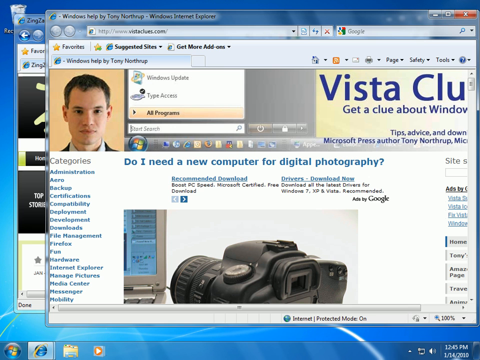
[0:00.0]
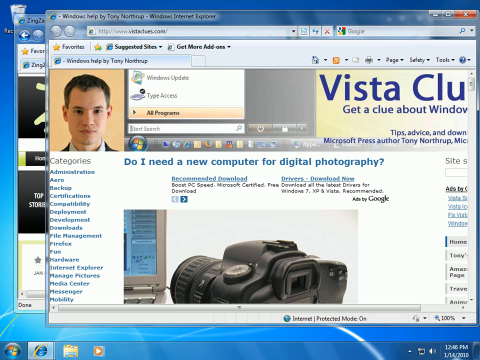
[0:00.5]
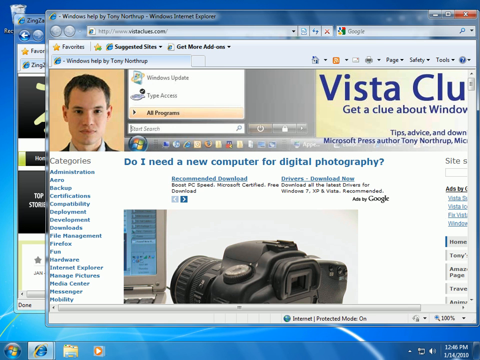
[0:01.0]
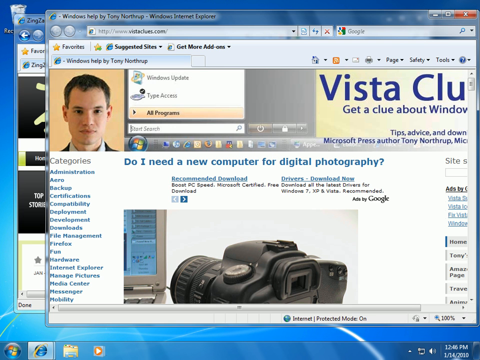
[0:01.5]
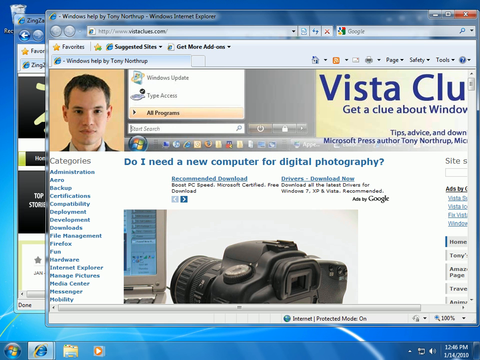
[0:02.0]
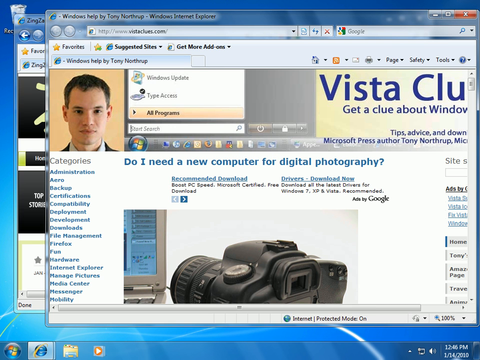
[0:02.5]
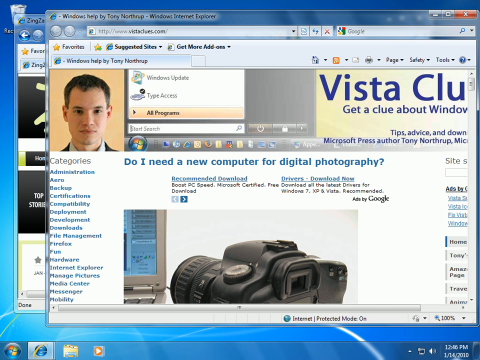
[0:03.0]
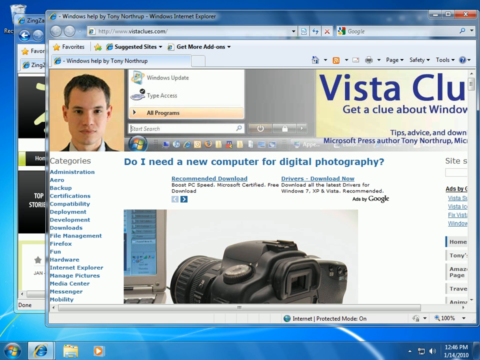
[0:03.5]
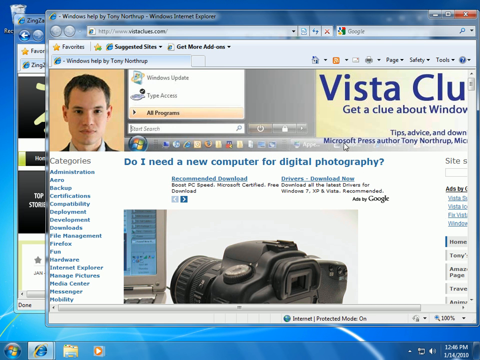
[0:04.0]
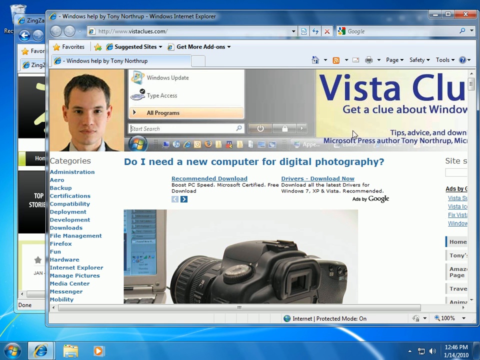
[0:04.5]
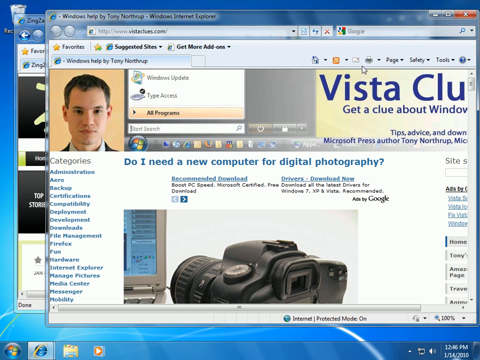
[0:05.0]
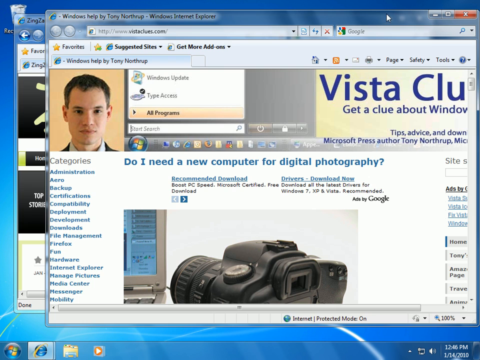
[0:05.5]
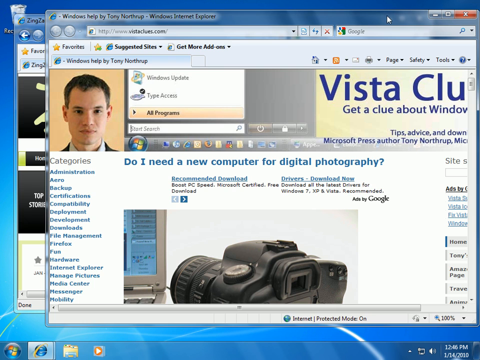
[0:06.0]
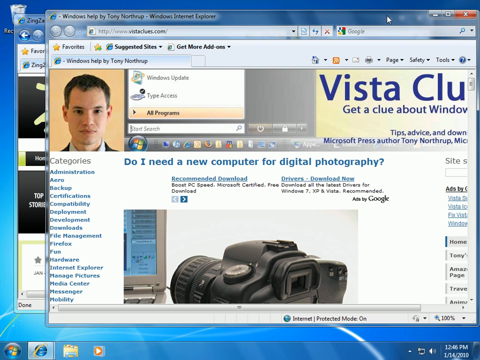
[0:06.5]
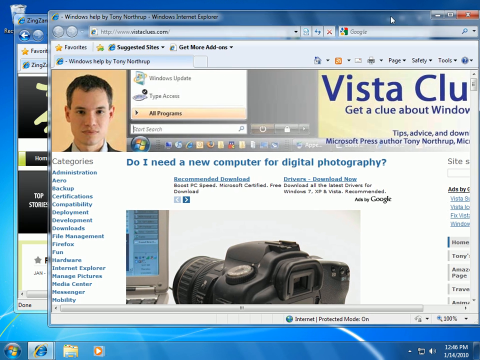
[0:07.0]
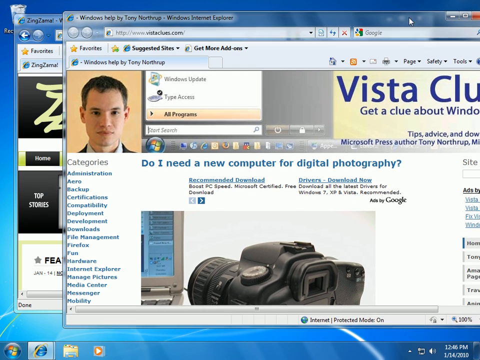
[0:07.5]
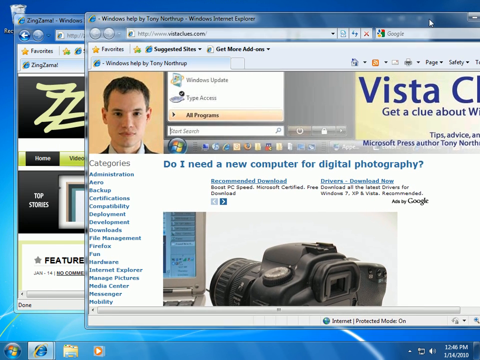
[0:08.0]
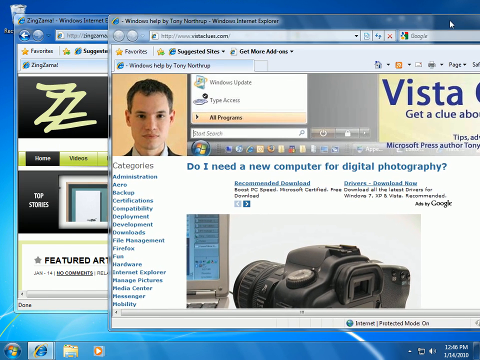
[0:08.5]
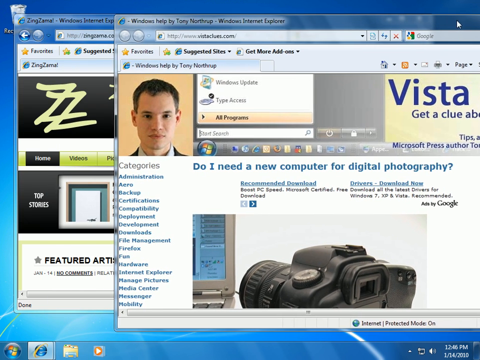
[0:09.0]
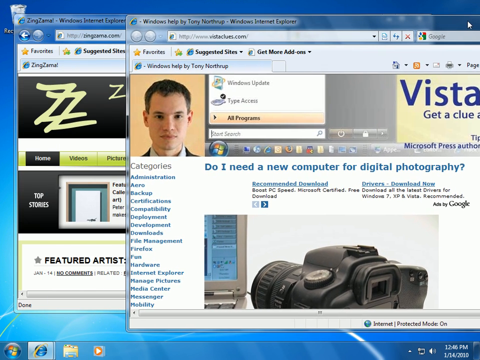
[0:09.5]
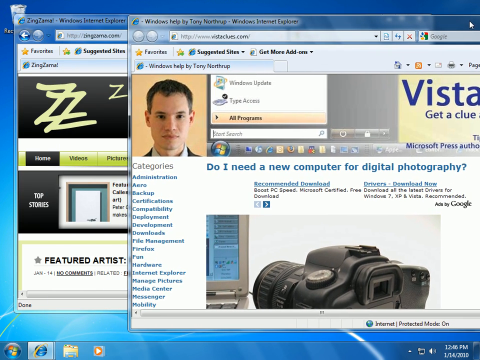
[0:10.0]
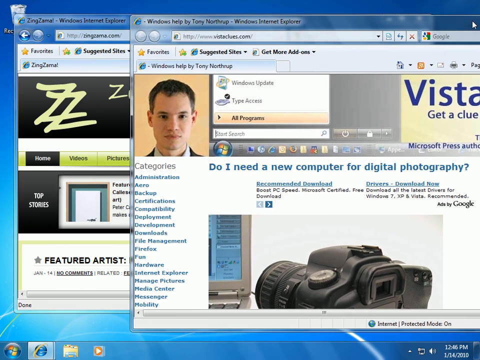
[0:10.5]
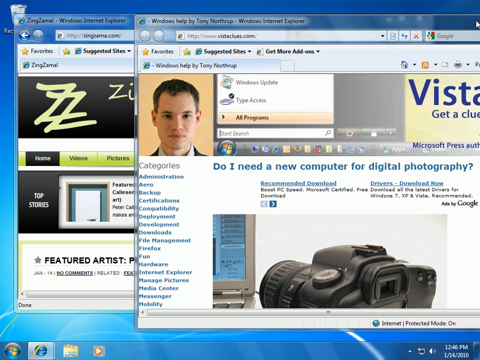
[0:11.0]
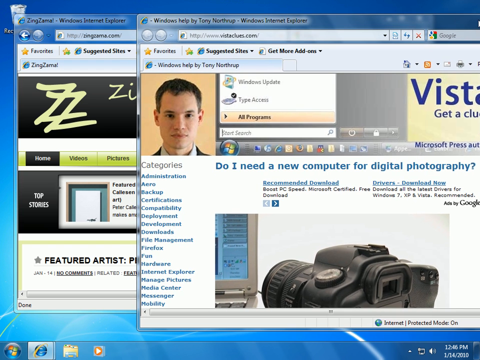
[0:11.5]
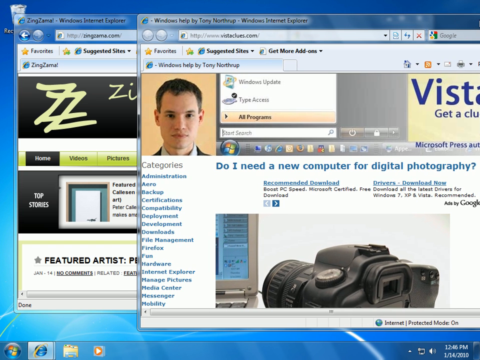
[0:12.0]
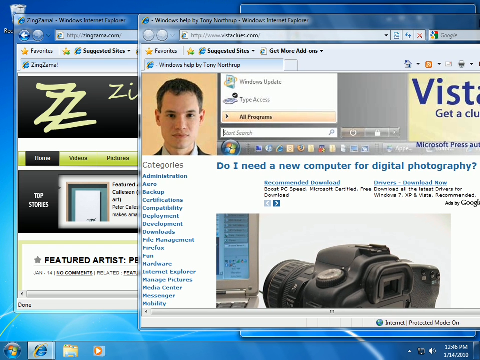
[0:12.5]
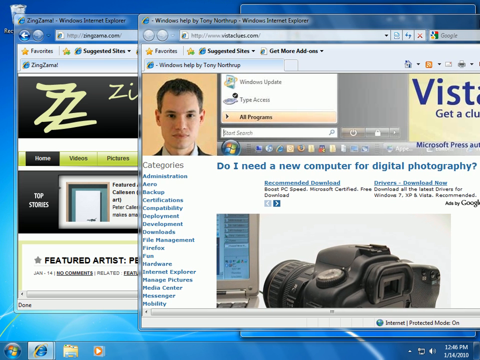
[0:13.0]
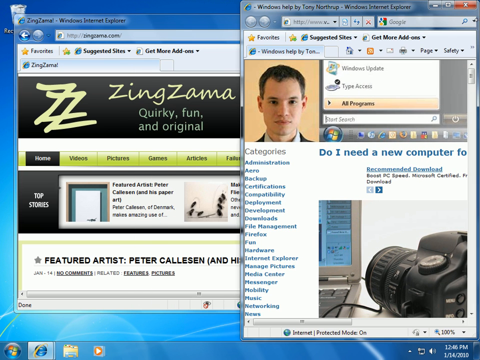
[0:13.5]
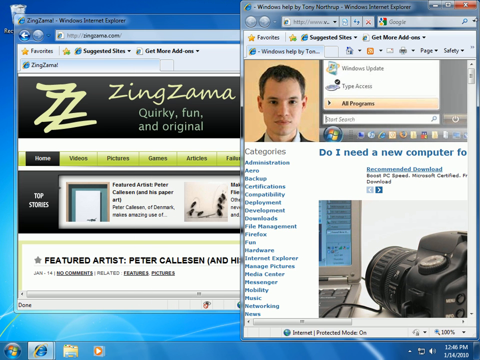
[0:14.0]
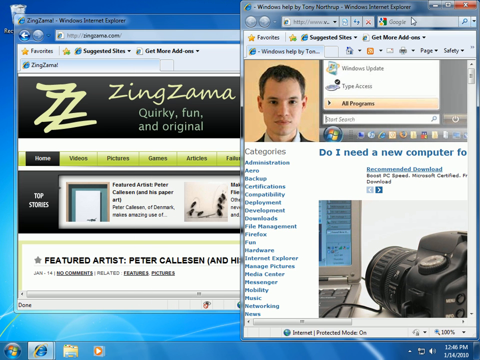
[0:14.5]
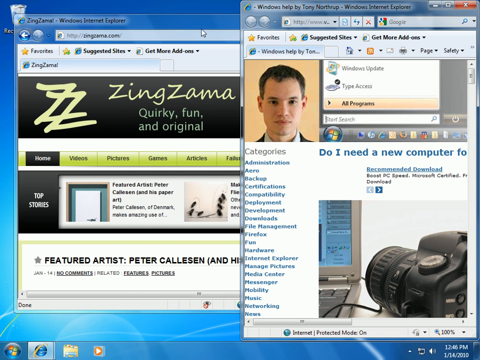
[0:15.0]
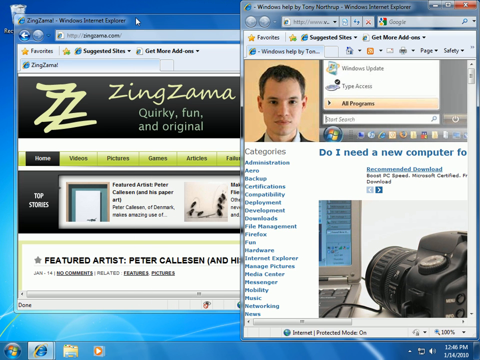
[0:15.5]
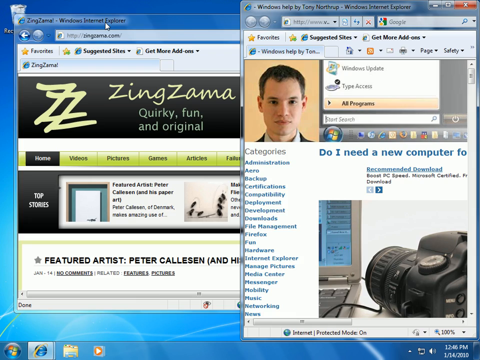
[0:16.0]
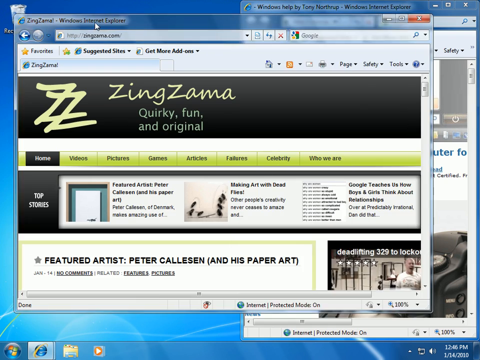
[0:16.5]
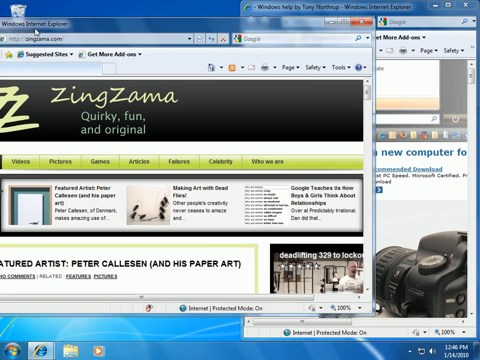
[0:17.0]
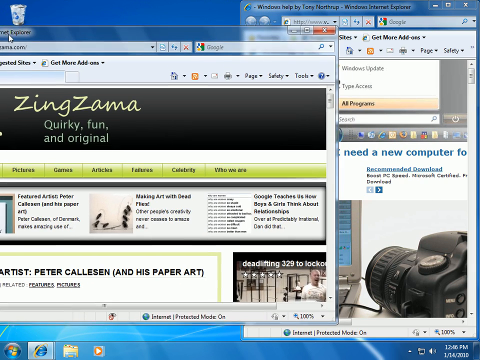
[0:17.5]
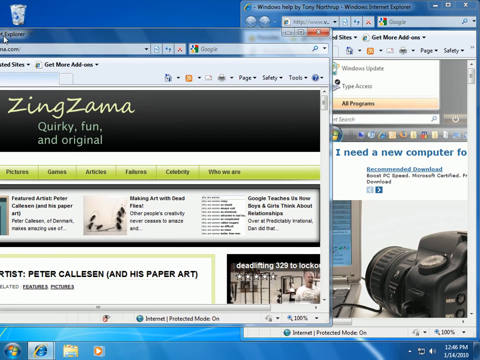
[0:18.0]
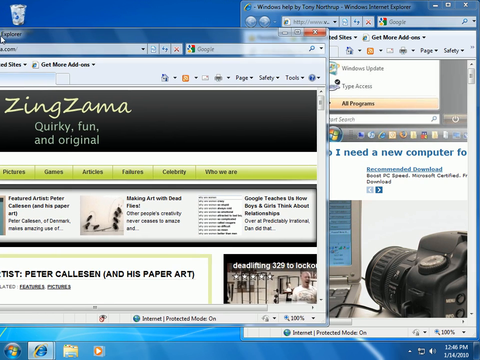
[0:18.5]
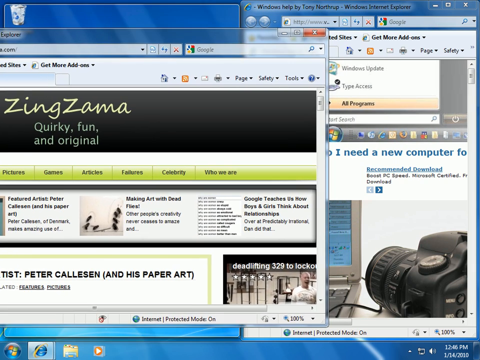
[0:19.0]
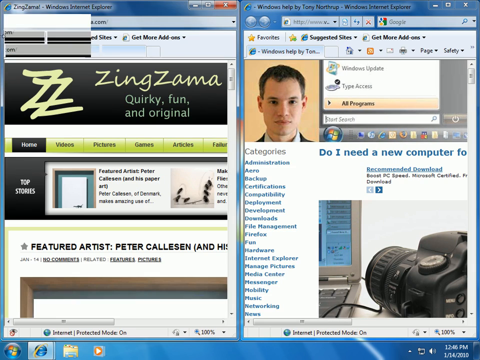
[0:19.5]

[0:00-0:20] Two webpages are open on a computer screen in a Windows Internet Explorer browser. The page in front has a picture of a man in the upper left-hand corner; underneath it reads "do I need a new computer for digital photography?", and below that is an image of a camera. The window is slowly moved off to the right side and then fully minimized so it is off that side, revealing the second page, which is pulled to the front. Its banner at the top reads "ZingZama, quirky, fun, and original." This window is slowly moved over to the right or to the left and then collapsed as well. Both websites look somewhat old and are very cluttered, with many images and a lot of text. The ZingZama page also mentions Peter Callesen and his paper art.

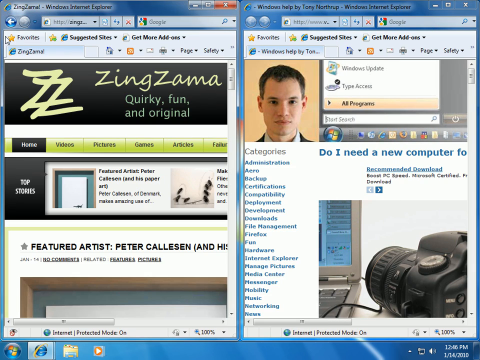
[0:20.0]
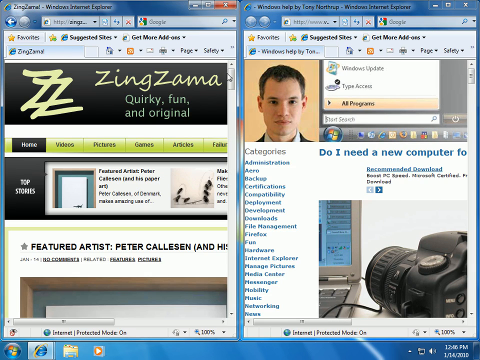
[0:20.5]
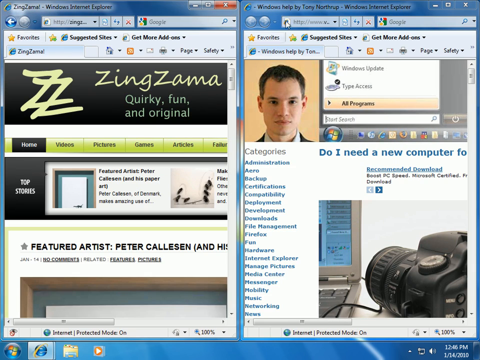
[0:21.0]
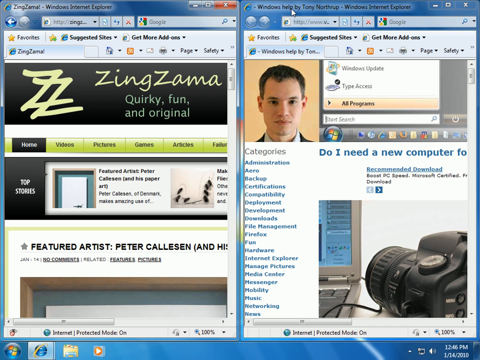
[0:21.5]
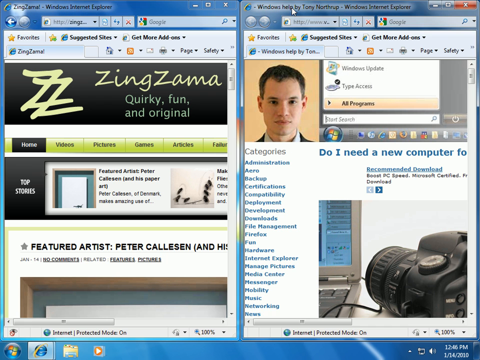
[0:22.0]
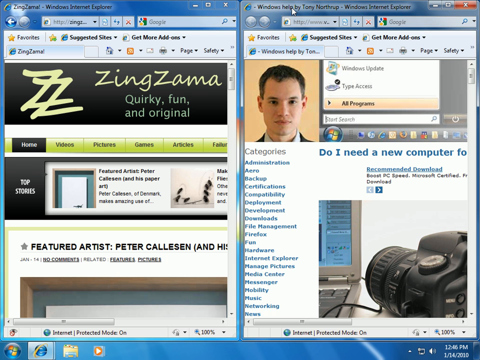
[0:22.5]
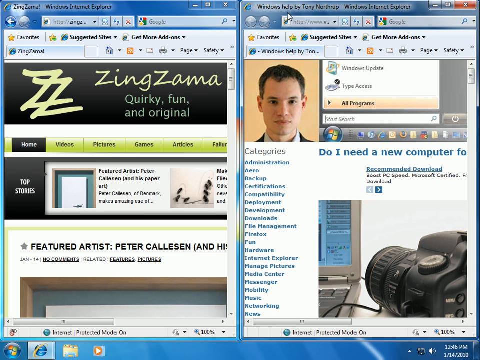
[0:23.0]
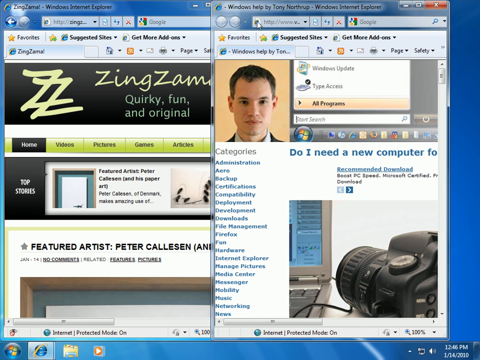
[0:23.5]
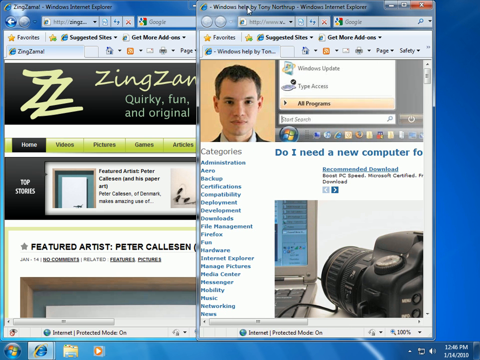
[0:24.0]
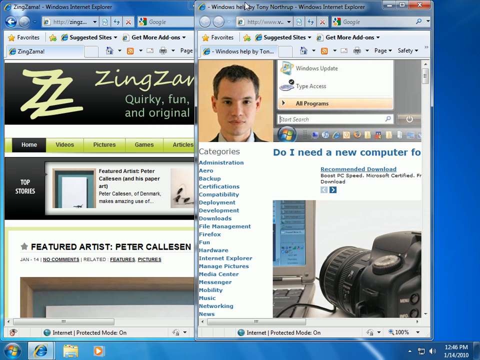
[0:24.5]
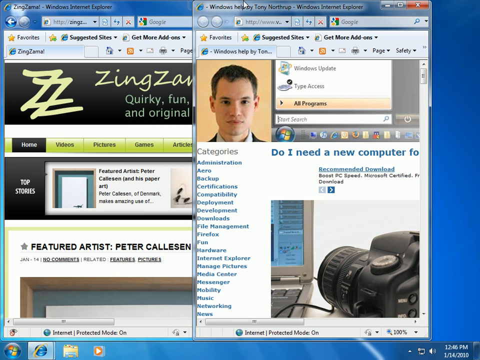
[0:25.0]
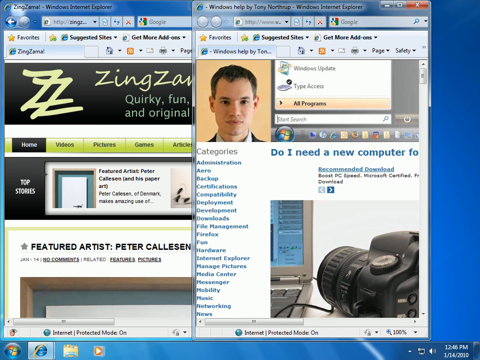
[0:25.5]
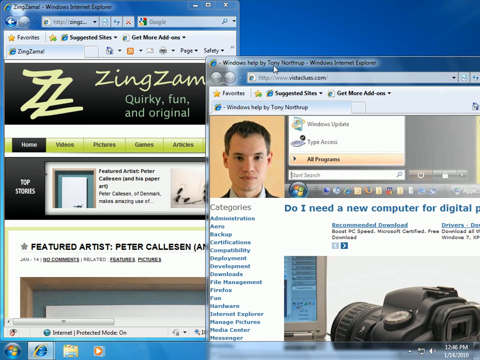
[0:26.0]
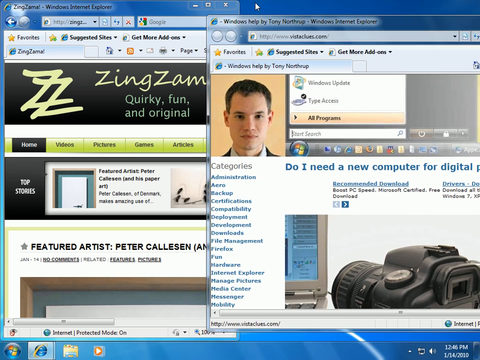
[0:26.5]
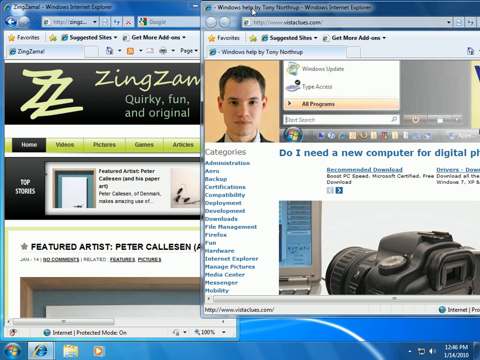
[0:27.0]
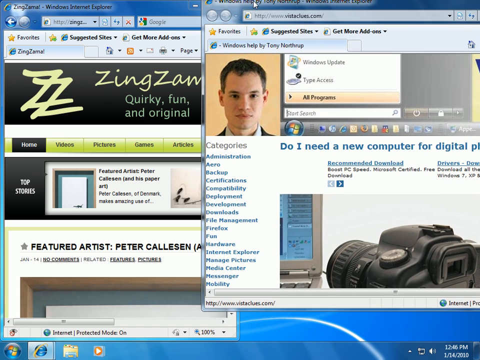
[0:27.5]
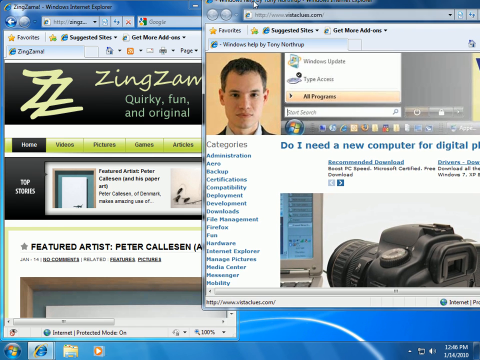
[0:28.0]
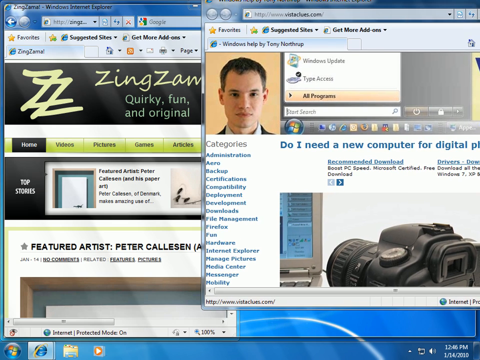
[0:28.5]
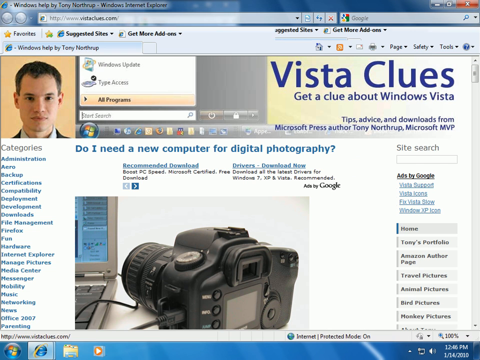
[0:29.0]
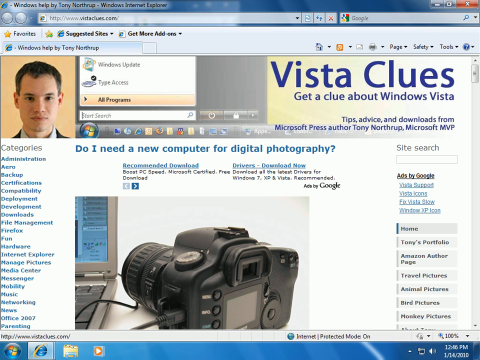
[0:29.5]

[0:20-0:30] The web pages are moved side by side on the same screen. The page on the right is moved over slightly and expanded, then moved completely on top of both, maximized so it takes up the entire screen. The video seems to be demonstrating how to work with two different windows on a monitor. The full page of the former right-hand window is now visible. In its upper right-hand corner it reads "Vista Clues. Get a clue about Windows Vista. Tips, advice, and downloads from Microsoft Press author Tony Northrup, Microsoft MVP." This appears to be an ad on a page revolving around photography.